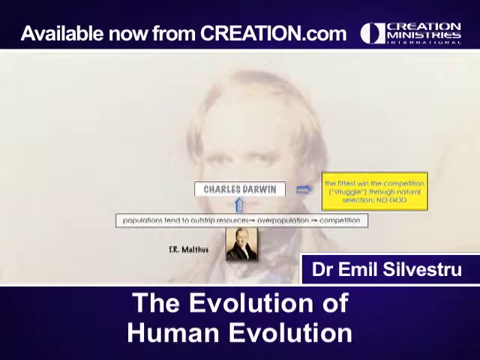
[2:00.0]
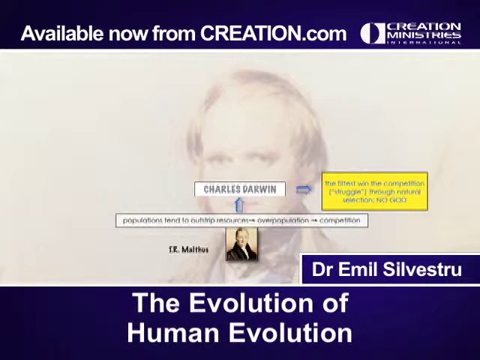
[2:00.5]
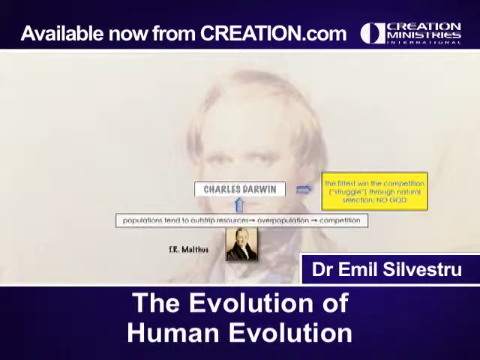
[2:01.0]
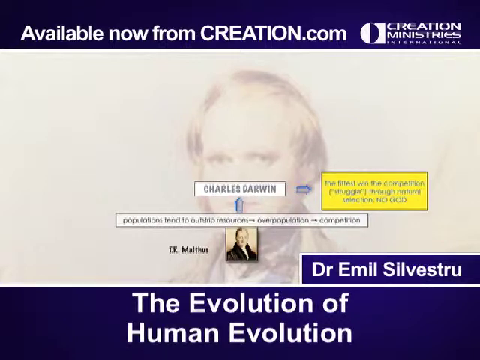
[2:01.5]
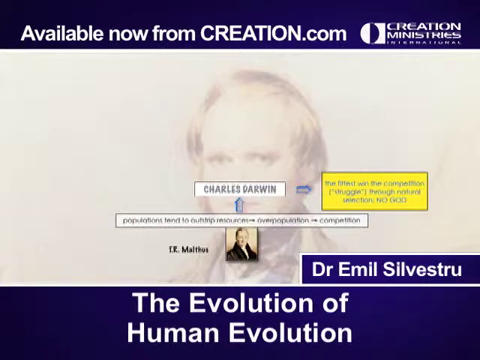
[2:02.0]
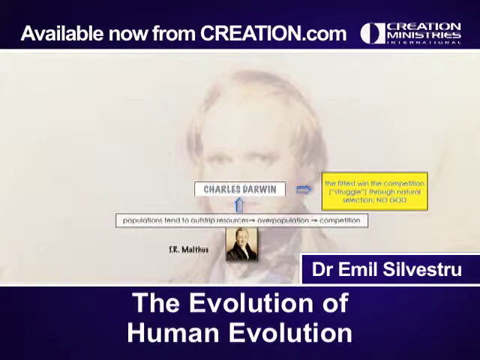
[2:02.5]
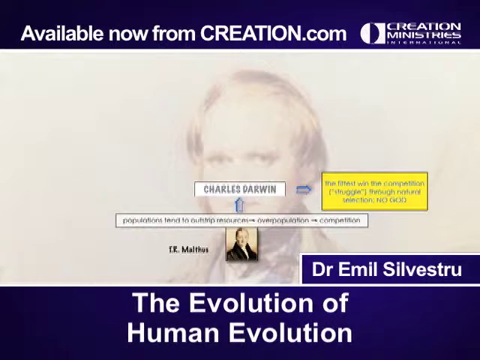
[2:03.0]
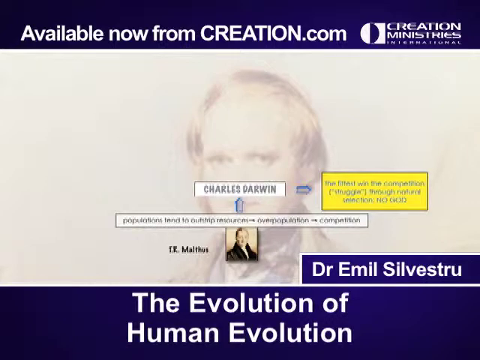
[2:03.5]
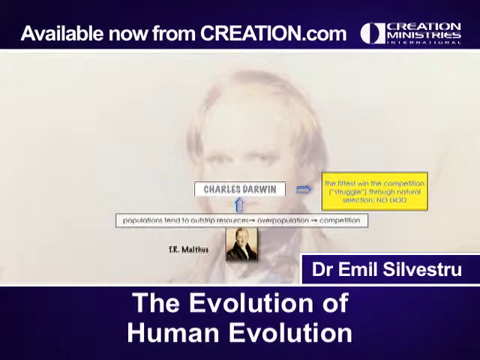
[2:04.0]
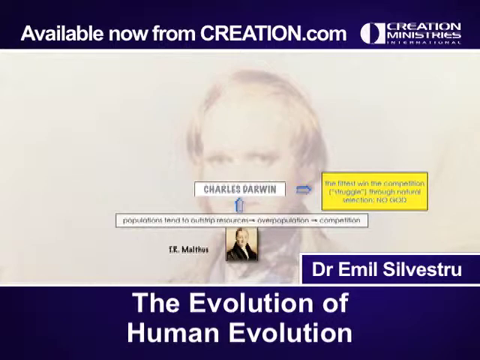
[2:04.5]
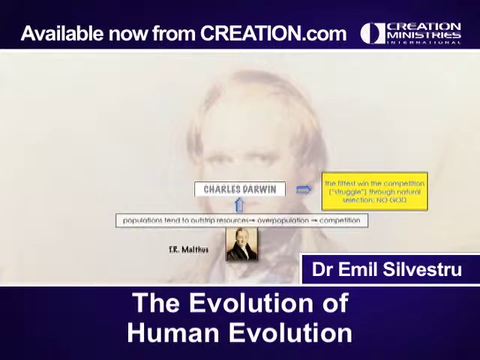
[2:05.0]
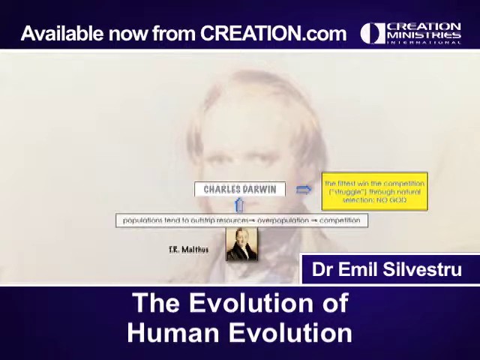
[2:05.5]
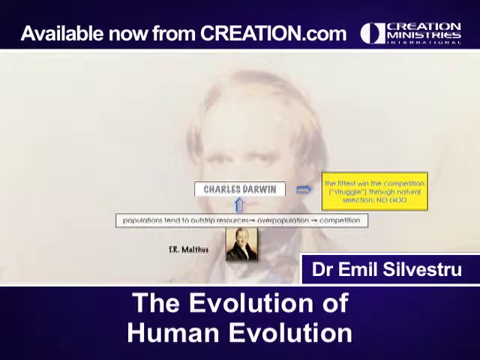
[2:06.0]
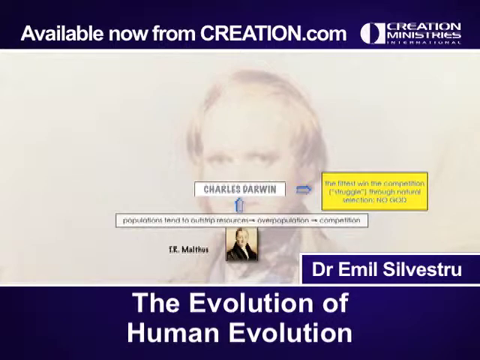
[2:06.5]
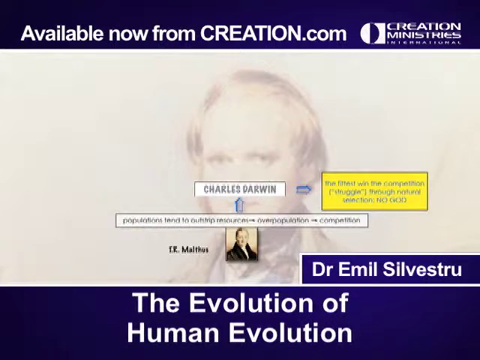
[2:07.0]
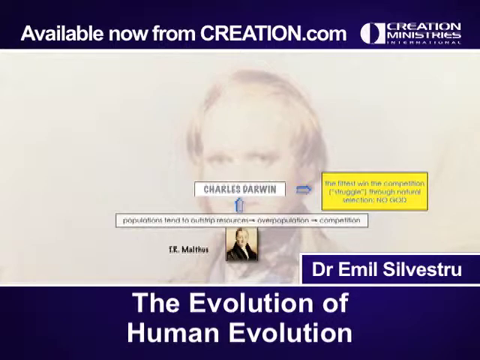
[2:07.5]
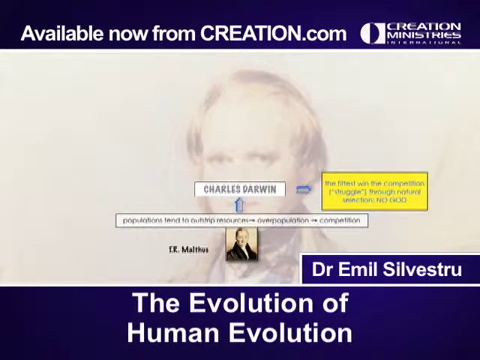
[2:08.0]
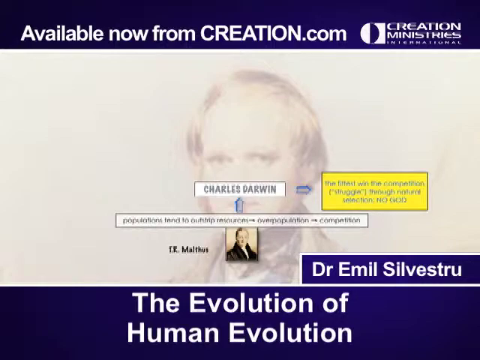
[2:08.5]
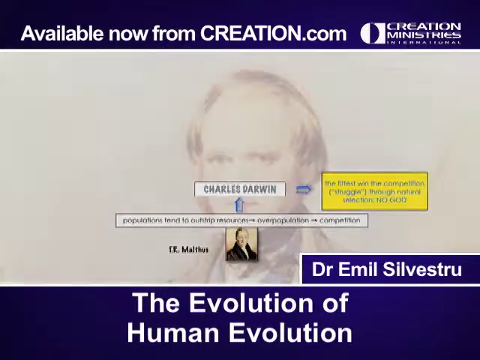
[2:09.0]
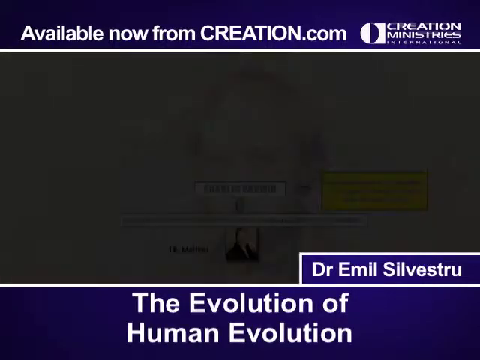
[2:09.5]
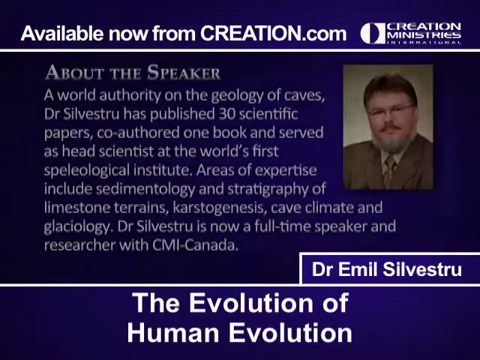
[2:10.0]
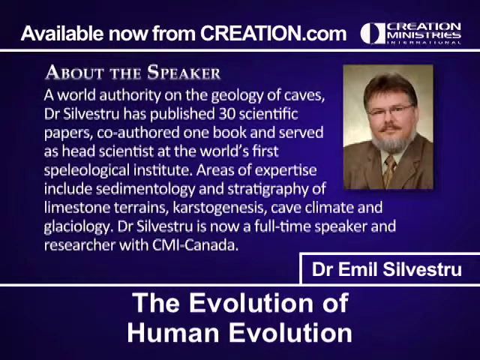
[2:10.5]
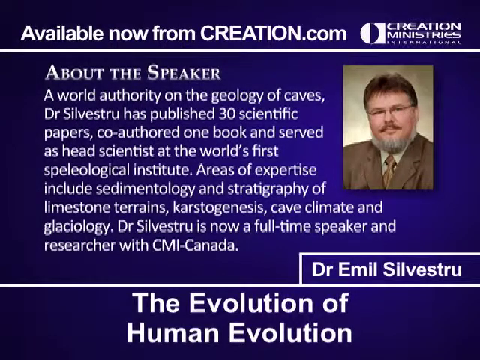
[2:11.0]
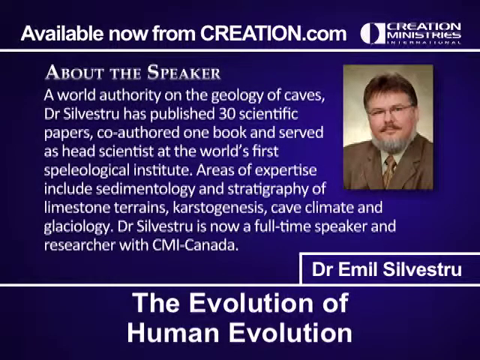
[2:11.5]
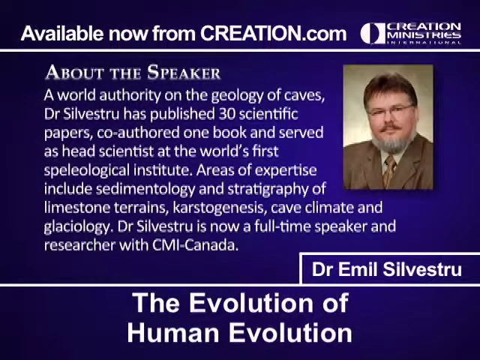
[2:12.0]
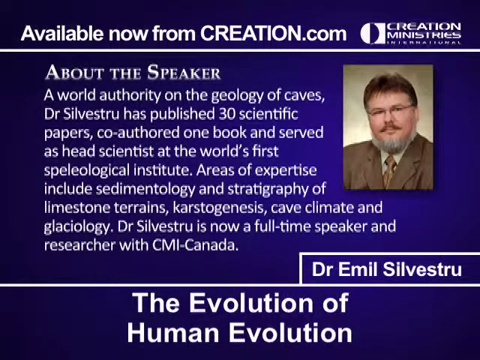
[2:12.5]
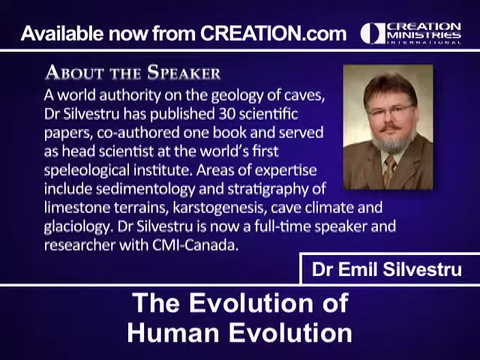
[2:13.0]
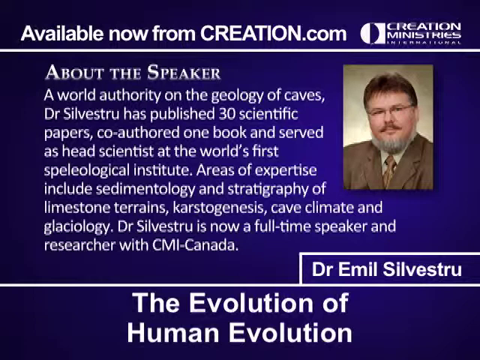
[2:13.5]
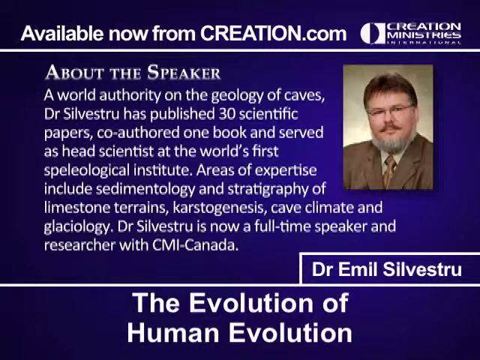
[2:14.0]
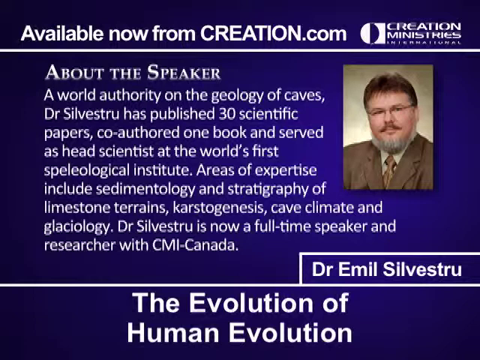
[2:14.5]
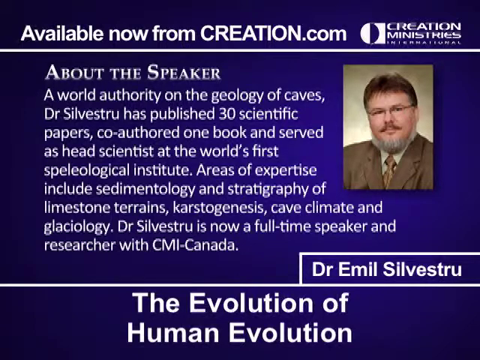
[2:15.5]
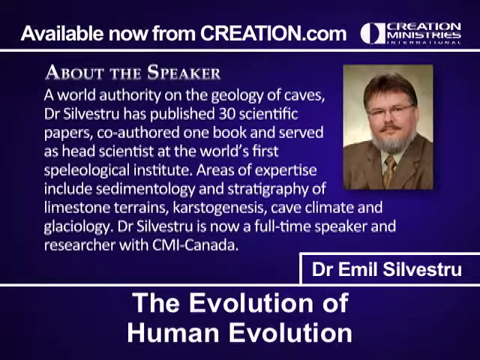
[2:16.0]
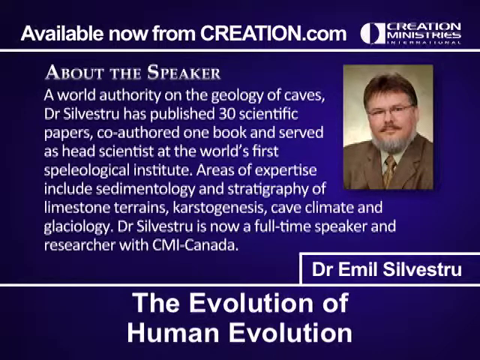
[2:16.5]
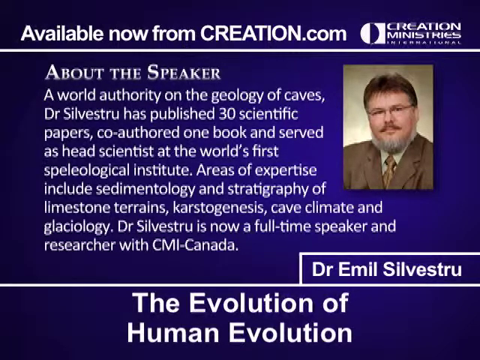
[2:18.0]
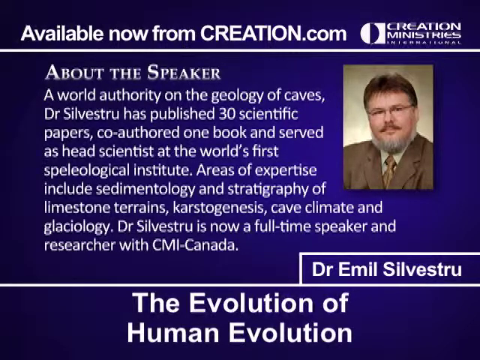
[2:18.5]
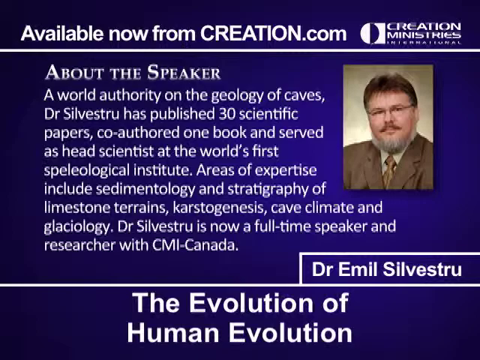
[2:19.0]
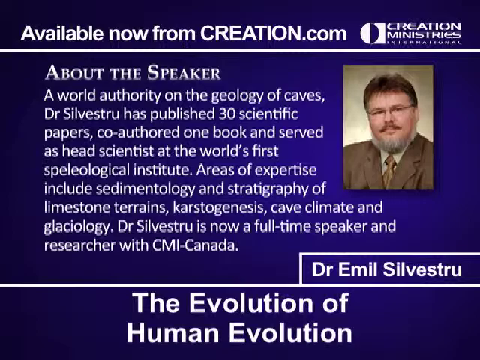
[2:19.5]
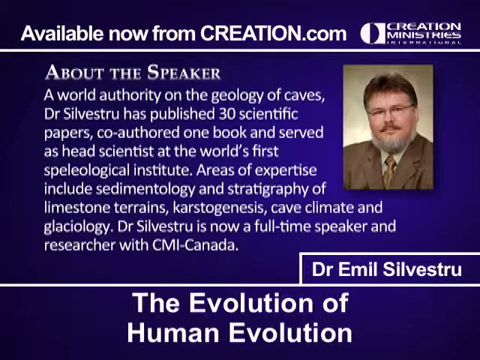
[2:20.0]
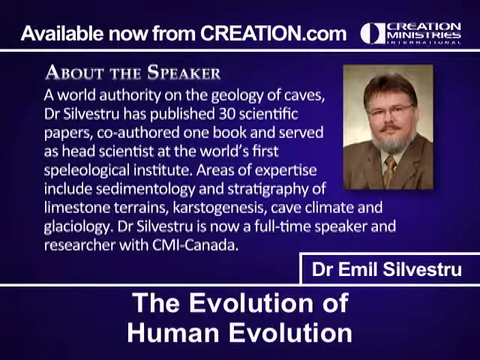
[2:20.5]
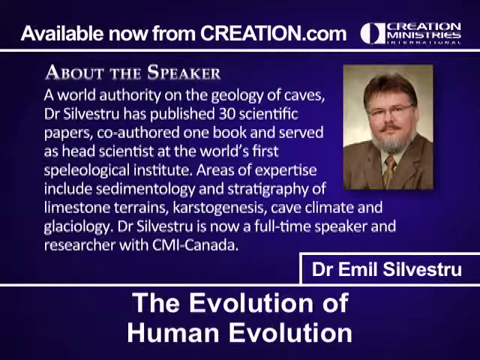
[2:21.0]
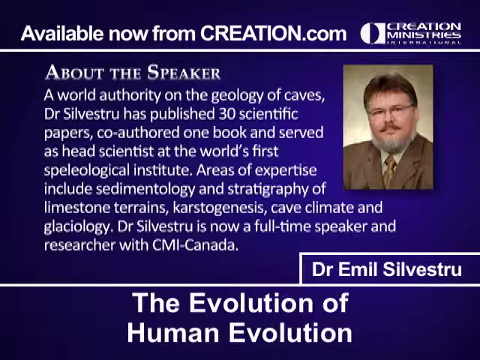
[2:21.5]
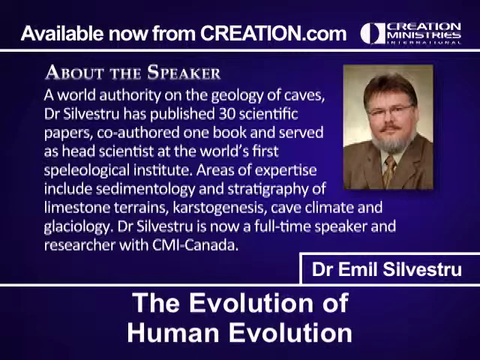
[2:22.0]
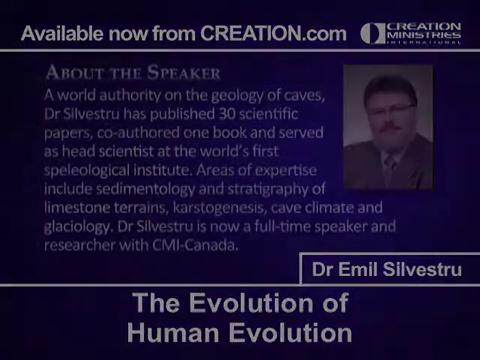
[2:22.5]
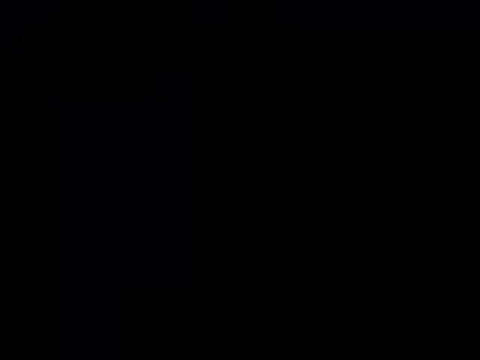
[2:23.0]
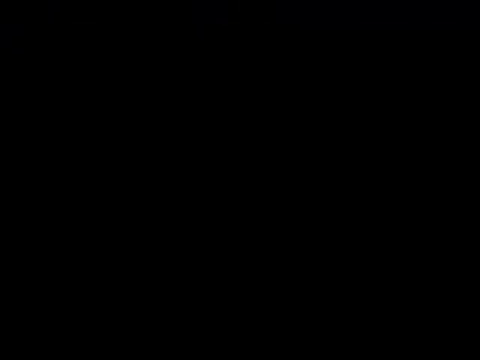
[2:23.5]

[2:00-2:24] The strip across the top of the video stays the same the whole time: a blue rectangle across the entire top reading "Available Now from creation.com" on the left, with the Creation Ministries International logo on the right. A purplish blue strip across the bottom, also consistent throughout, reads "the evolution of human evolution". The screen changes to information about the speaker, reading "about the speaker, A world authority on the geology of caves, Dr. Silvestru has published 30 scientific papers, co-authored one book, and served as head scientist at the world's first Speleological Institute. Areas of expertise include sedimentology and stratigraphy of limestone terrains, karstogenesis, cave climate, and glaciology. Dr. Silvestru is now a full-time speaker and researcher with CMI Canada."